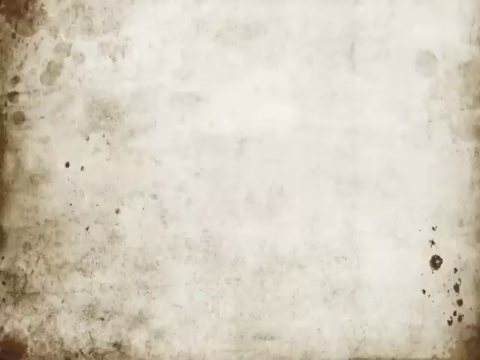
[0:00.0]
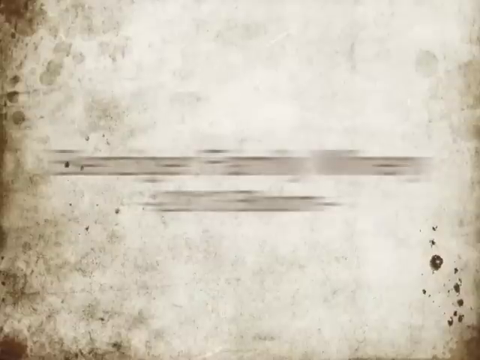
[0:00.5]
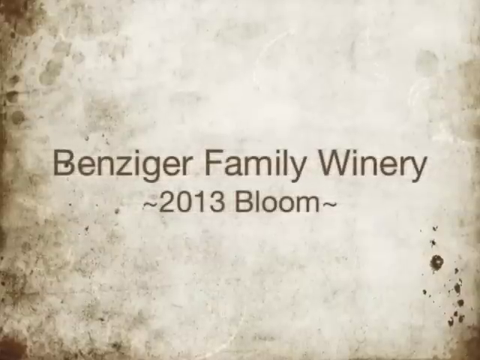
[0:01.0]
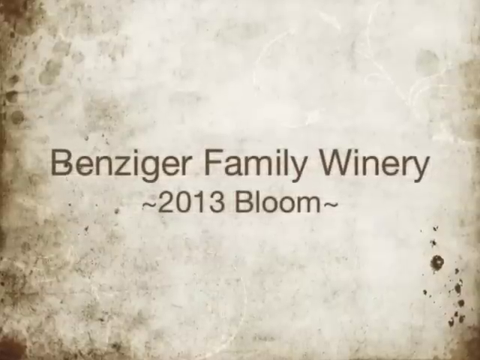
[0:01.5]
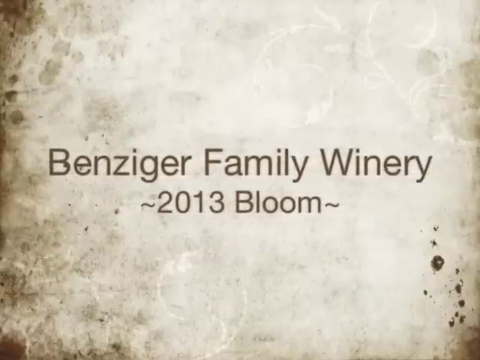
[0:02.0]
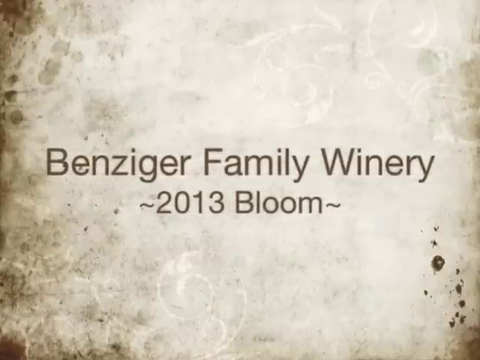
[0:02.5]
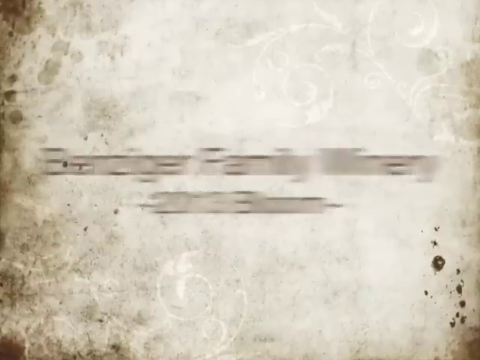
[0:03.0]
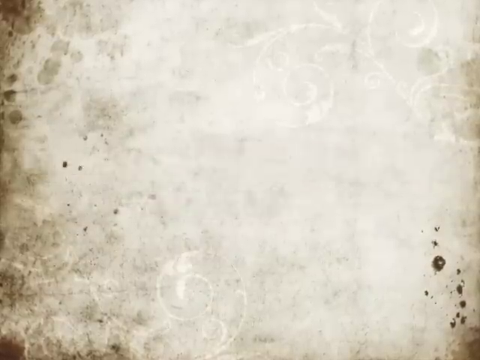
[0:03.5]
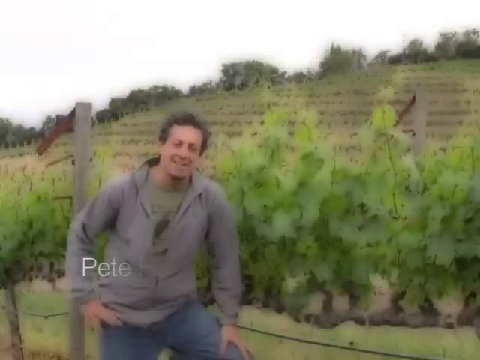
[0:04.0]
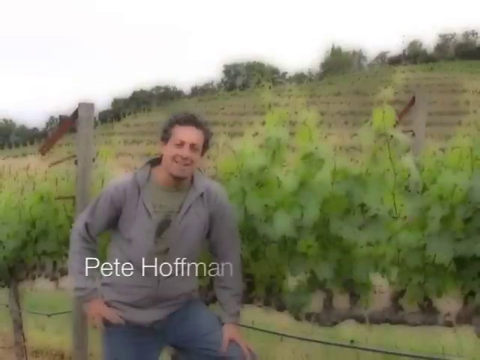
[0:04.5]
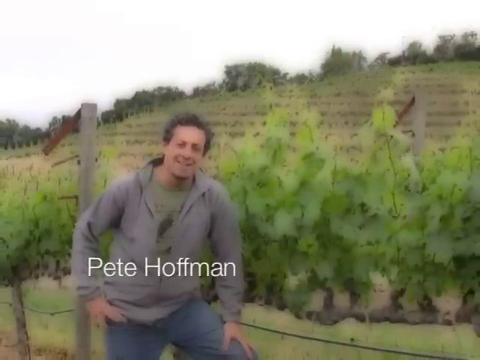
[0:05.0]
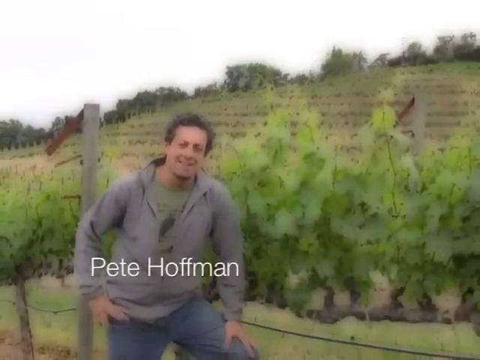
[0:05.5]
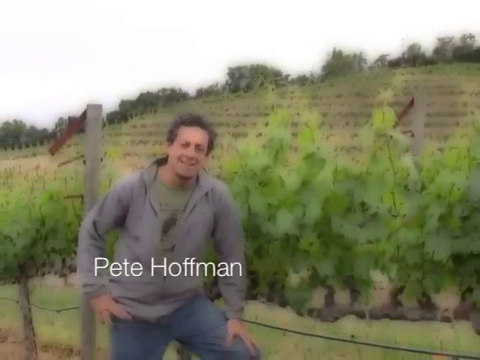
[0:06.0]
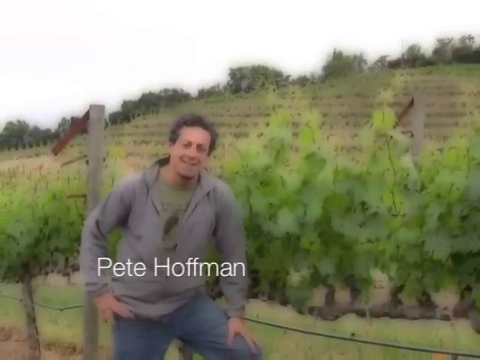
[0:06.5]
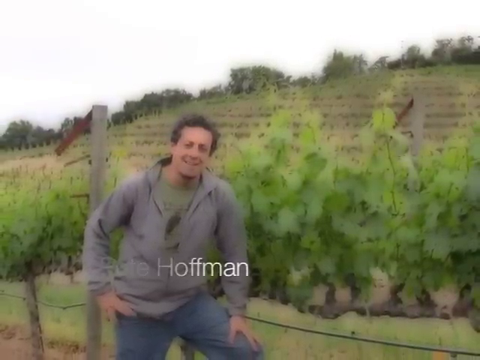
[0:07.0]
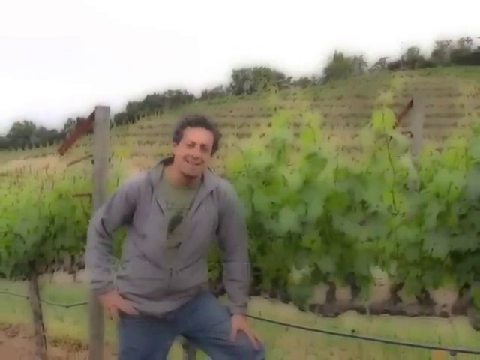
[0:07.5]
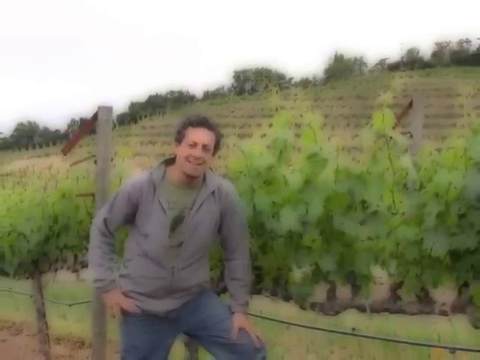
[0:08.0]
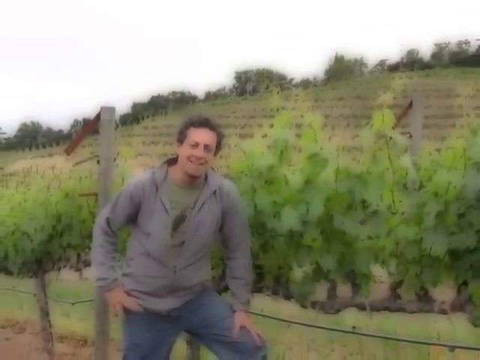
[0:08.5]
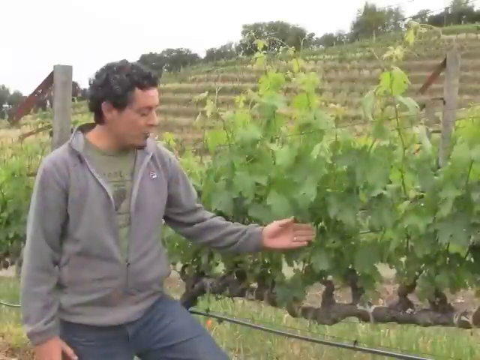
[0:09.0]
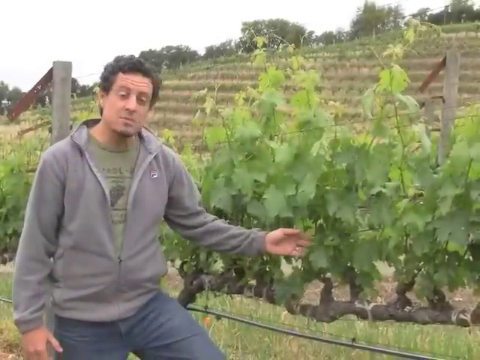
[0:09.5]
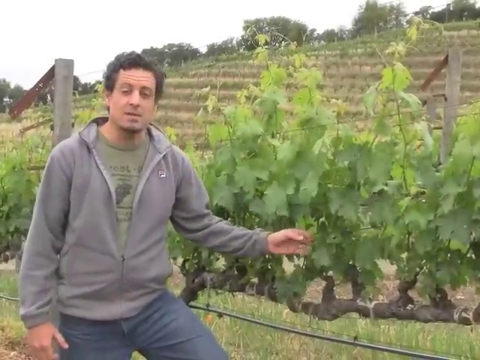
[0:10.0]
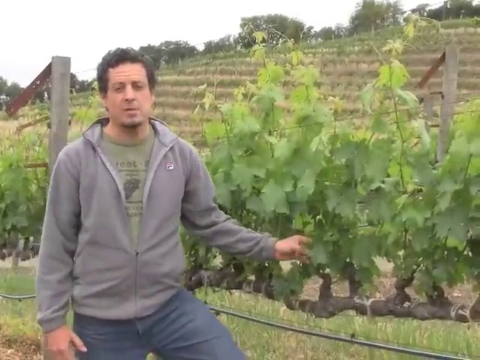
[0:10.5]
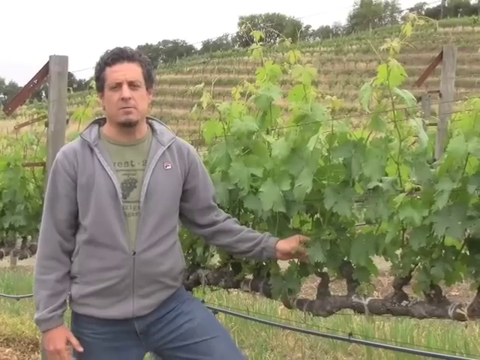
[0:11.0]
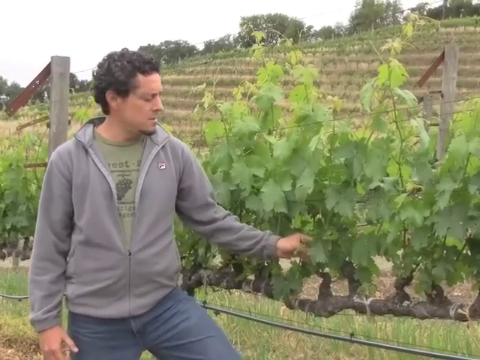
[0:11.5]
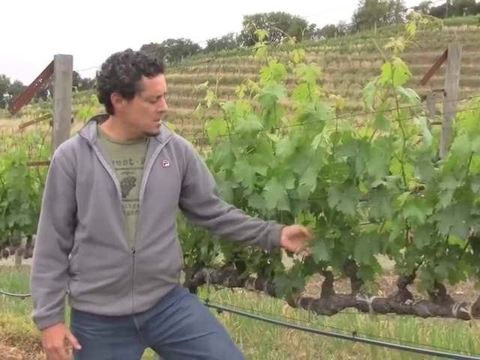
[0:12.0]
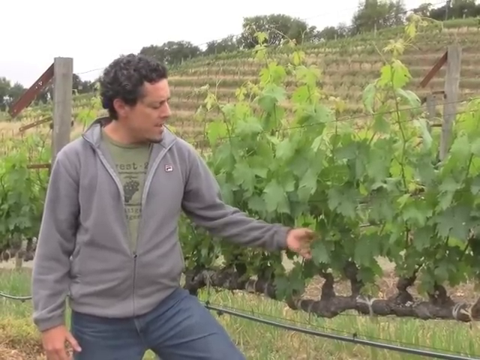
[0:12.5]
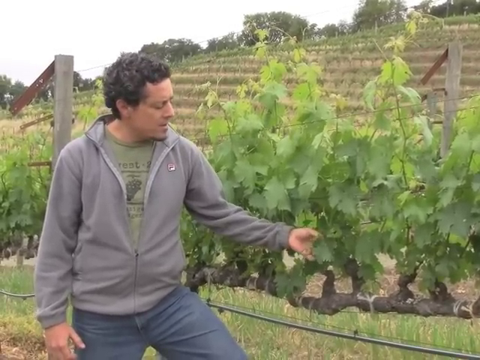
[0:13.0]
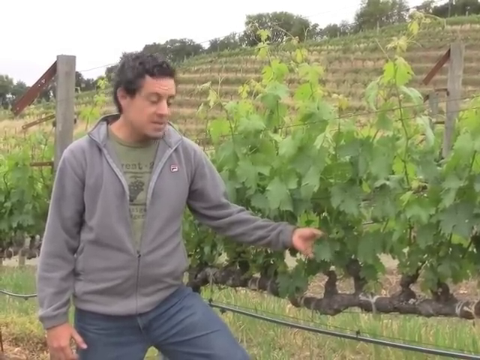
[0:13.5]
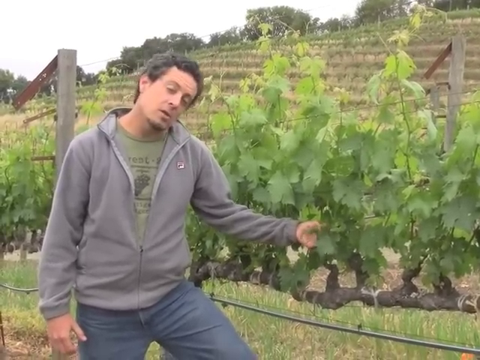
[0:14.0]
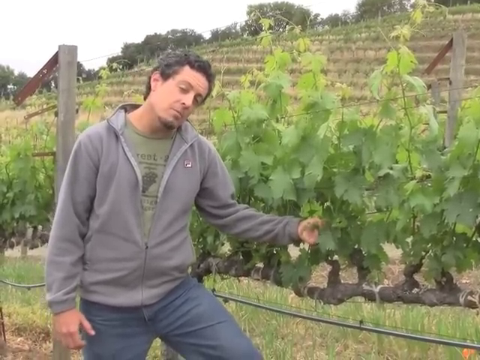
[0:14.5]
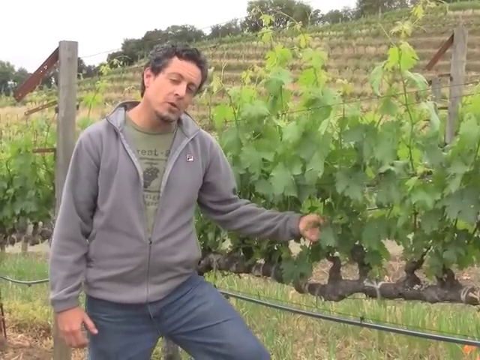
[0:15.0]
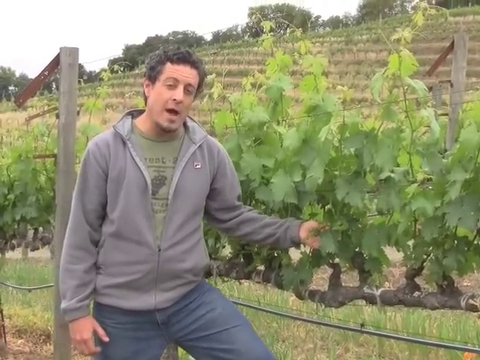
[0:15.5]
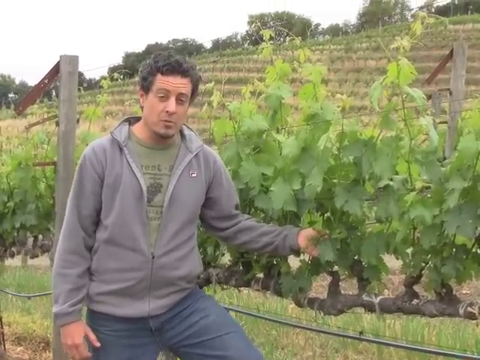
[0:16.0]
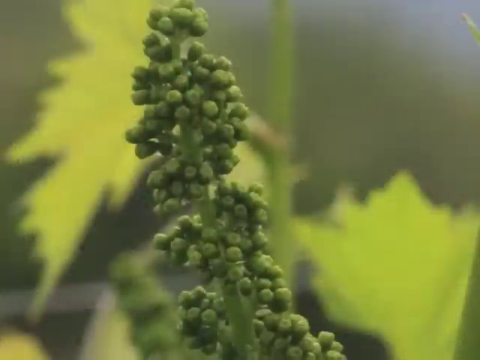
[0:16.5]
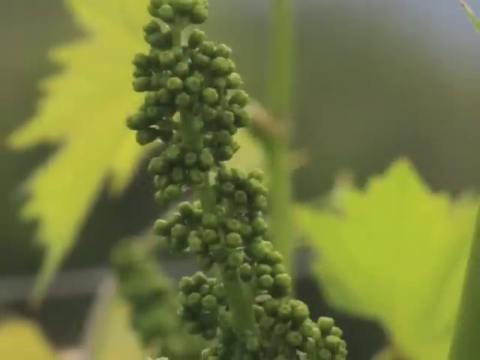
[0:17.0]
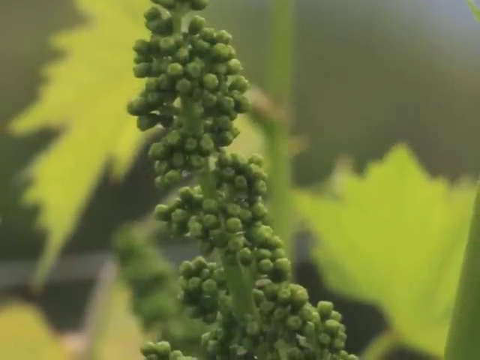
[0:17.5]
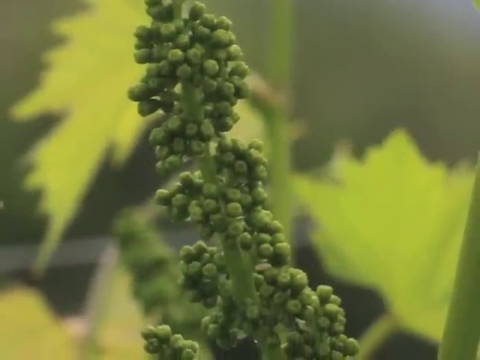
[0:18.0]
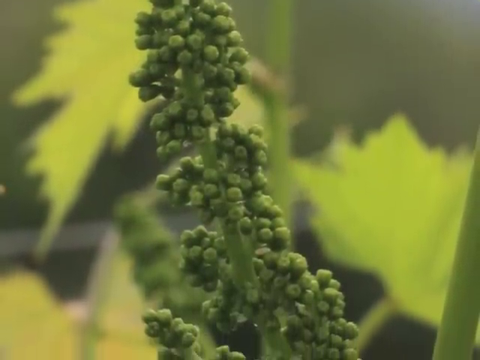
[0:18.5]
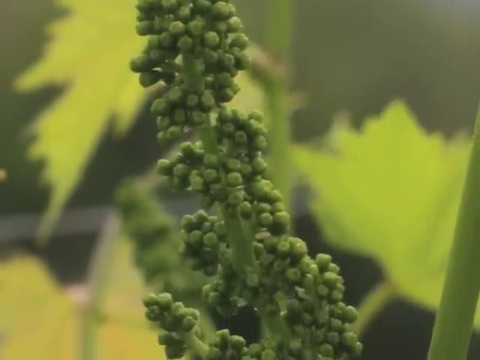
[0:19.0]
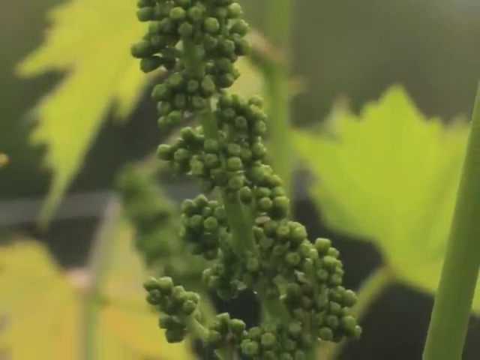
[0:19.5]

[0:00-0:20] The first image looks almost like an artificially burned piece of paper, with the text "Benzinger Family Winery, 2013 bloom" on it. That shifts out to a picture of a man named Pete Hoffman, who is sort of standing in front of a winery field; the picture is very blurry, so it is hard to tell exactly, but he can be seen standing there. It then switches to video of him, still standing in front of the winery and apparently talking about the leaves or the grapes. The background is almost like a rolling hill covered with vineyards of planted grape plants for the family's winery. He stands in the forefront wearing a gray zip-up hoodie, a green t-shirt, and either blue jeans or slacks.